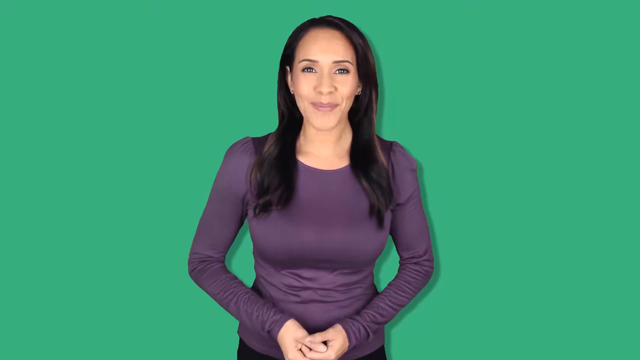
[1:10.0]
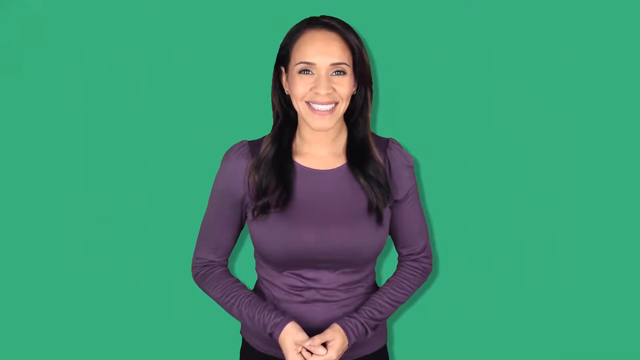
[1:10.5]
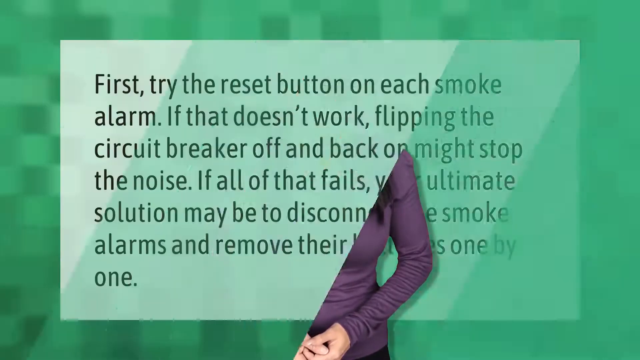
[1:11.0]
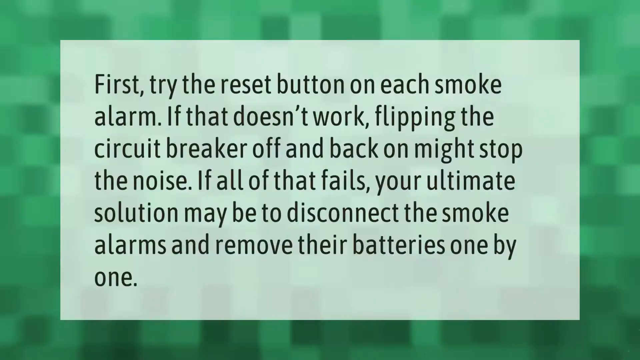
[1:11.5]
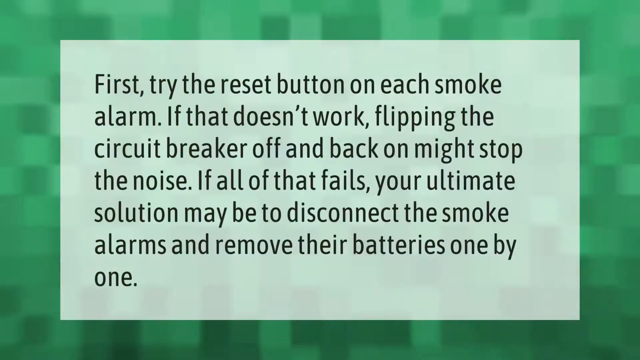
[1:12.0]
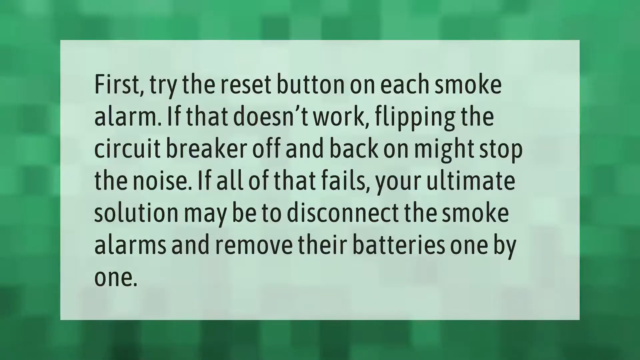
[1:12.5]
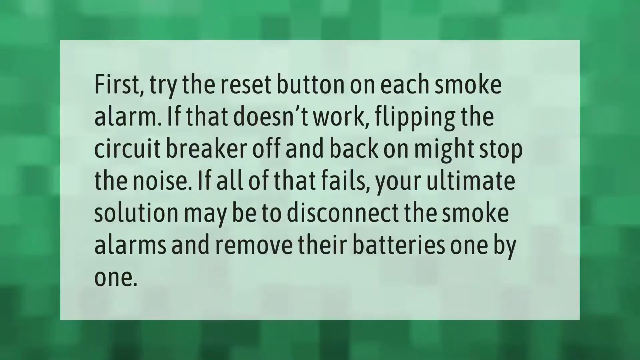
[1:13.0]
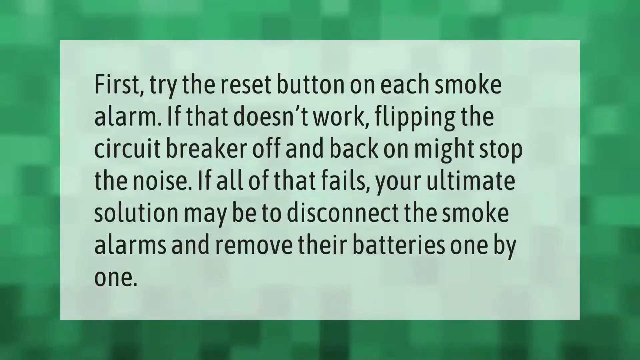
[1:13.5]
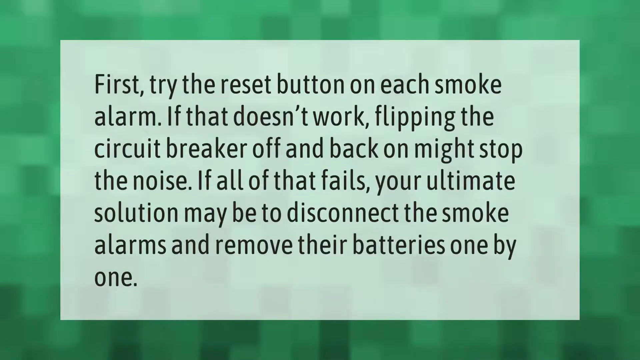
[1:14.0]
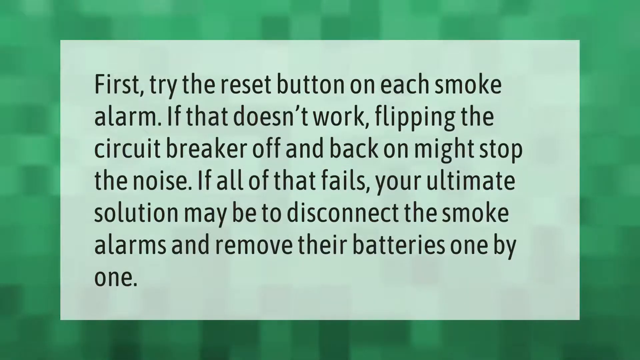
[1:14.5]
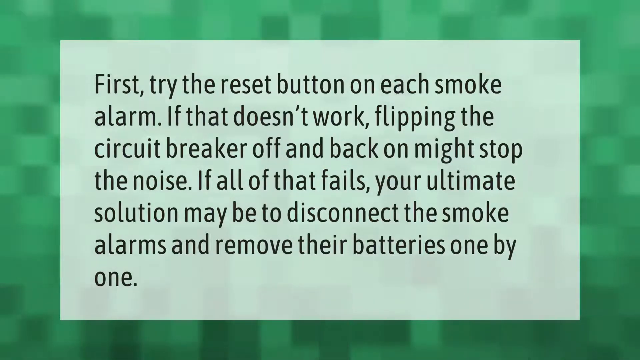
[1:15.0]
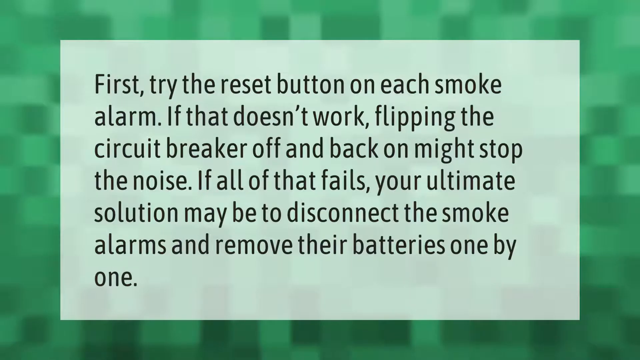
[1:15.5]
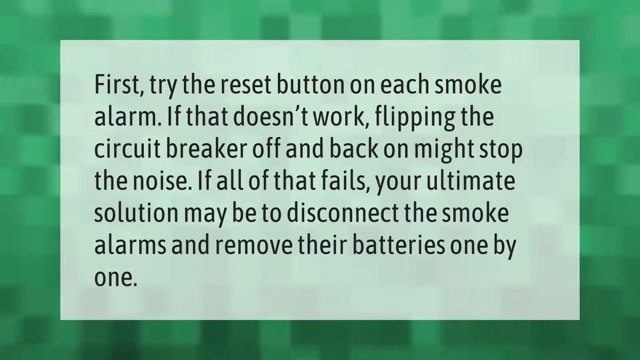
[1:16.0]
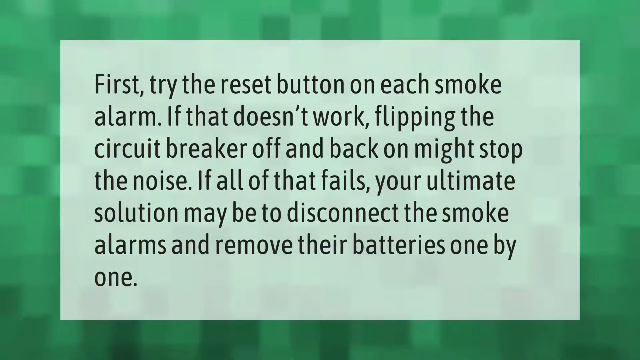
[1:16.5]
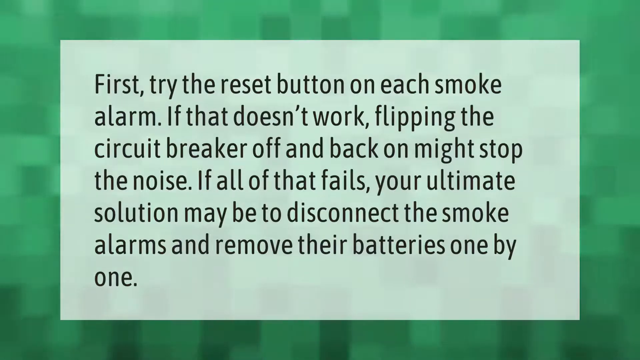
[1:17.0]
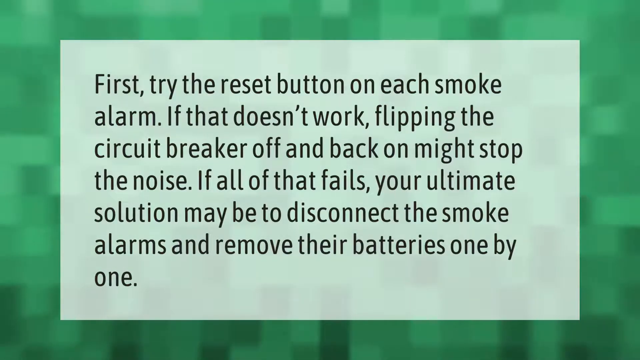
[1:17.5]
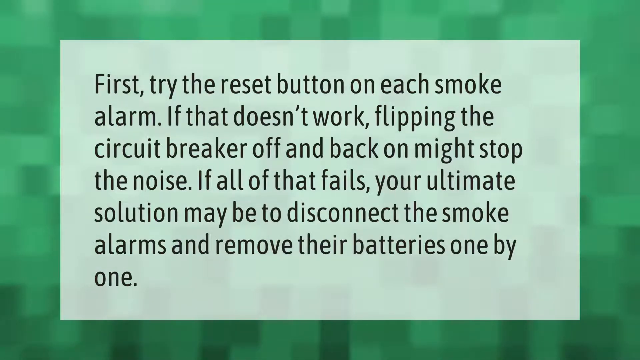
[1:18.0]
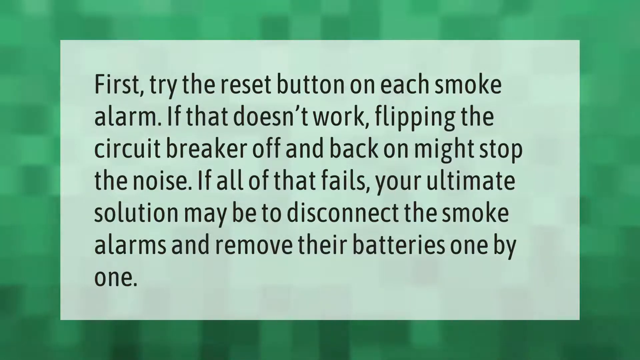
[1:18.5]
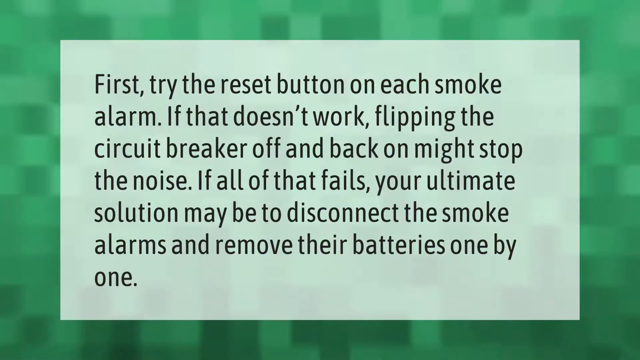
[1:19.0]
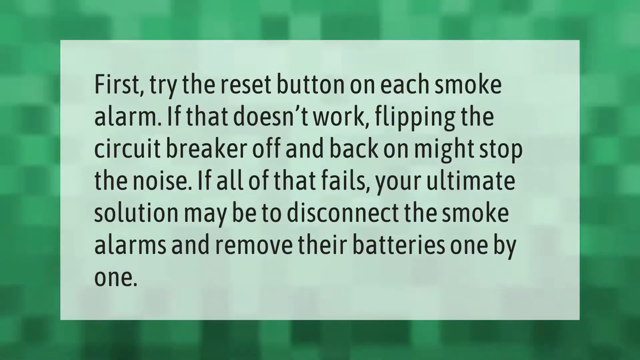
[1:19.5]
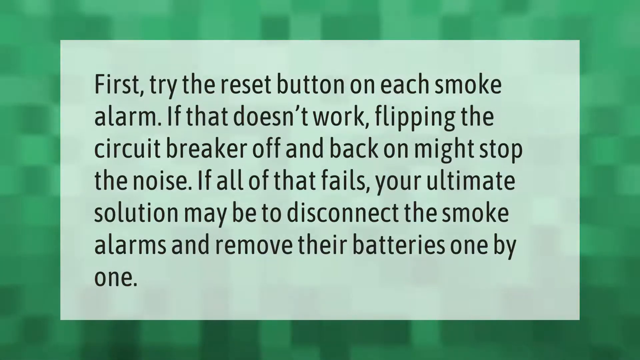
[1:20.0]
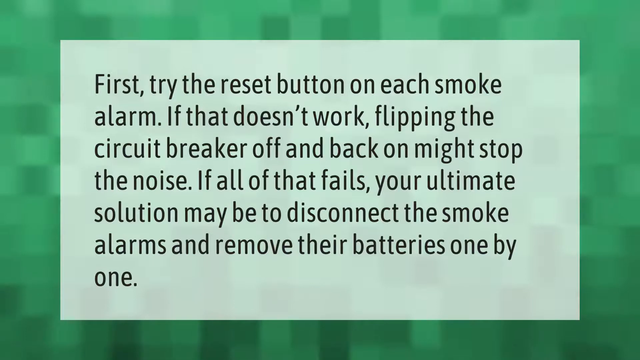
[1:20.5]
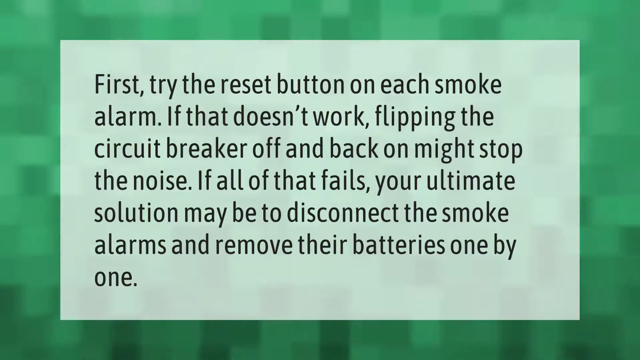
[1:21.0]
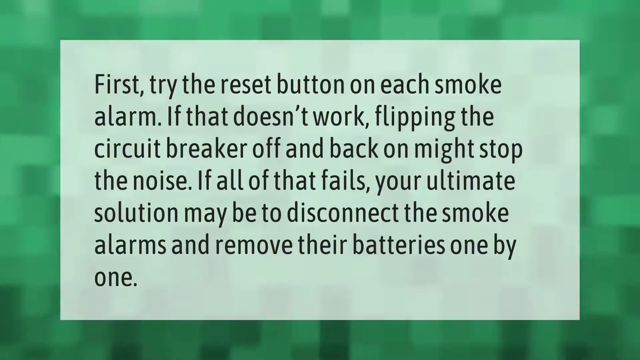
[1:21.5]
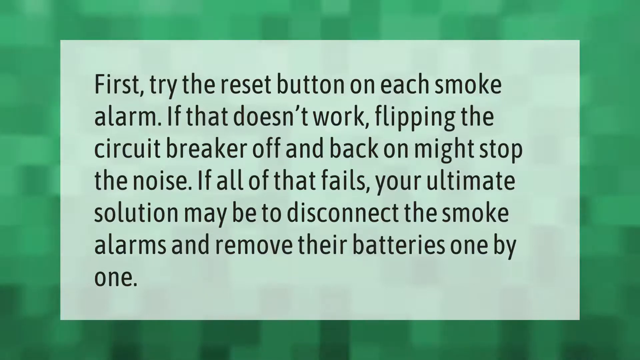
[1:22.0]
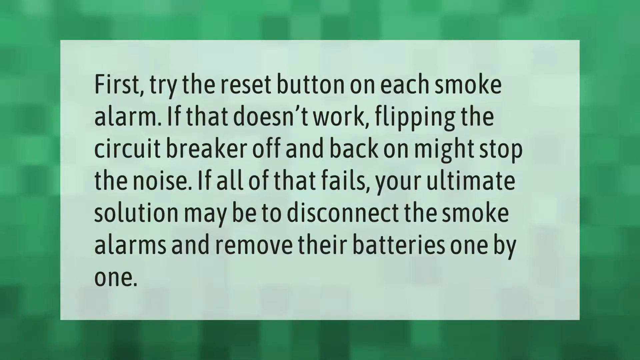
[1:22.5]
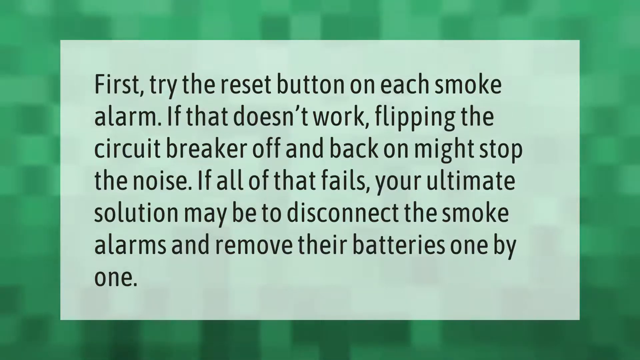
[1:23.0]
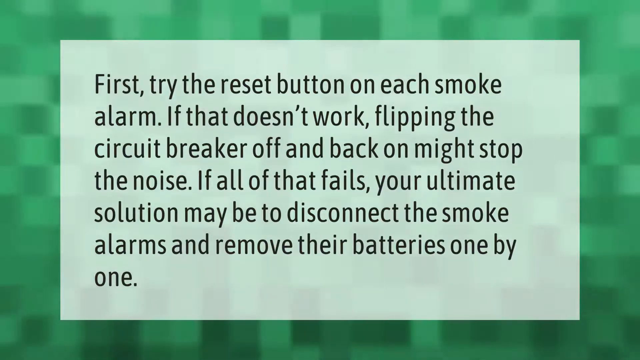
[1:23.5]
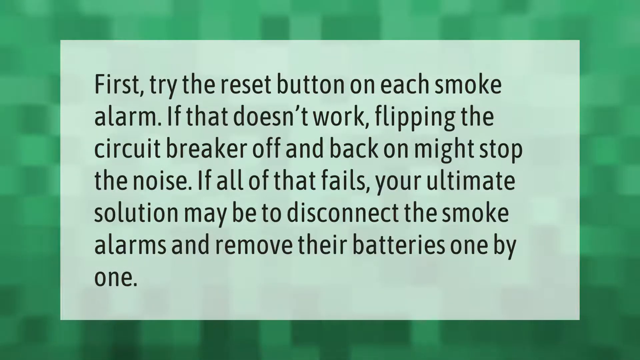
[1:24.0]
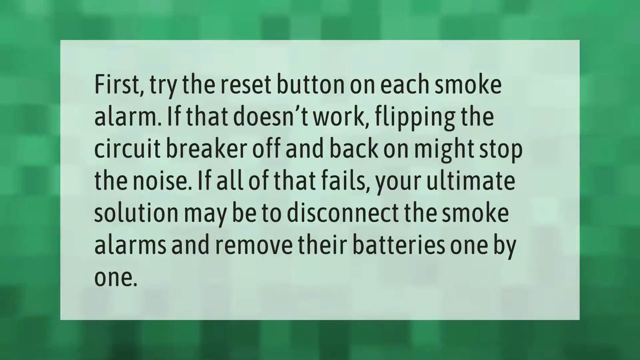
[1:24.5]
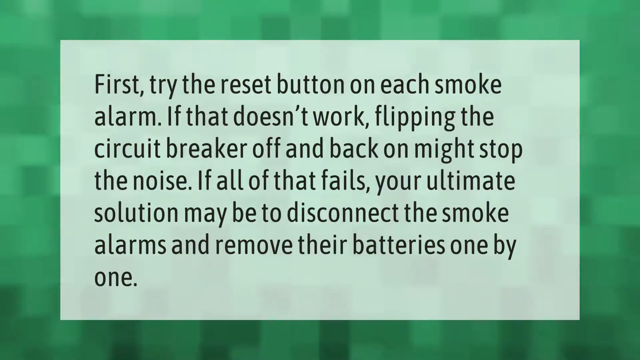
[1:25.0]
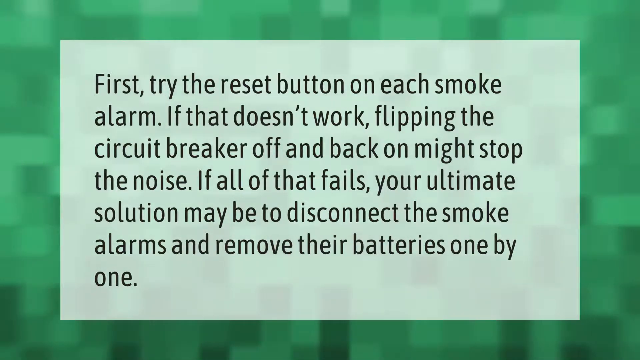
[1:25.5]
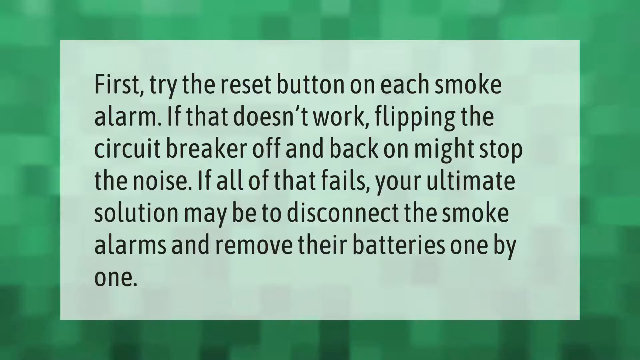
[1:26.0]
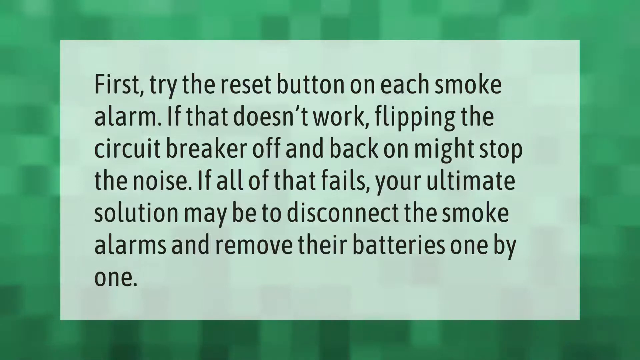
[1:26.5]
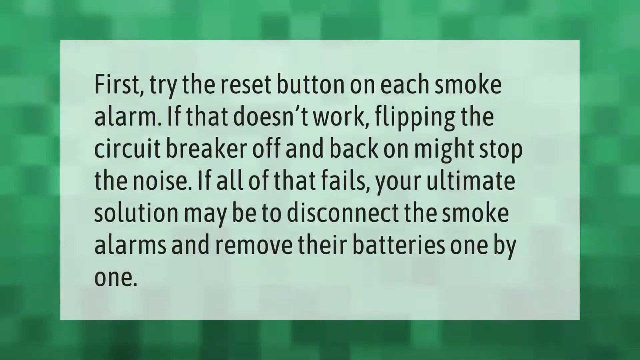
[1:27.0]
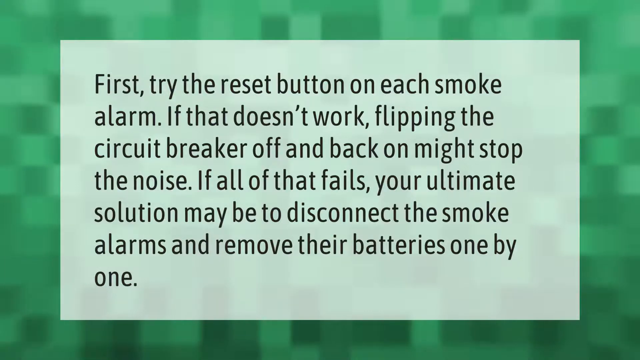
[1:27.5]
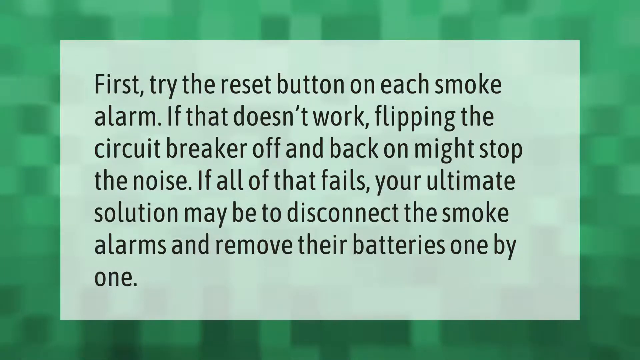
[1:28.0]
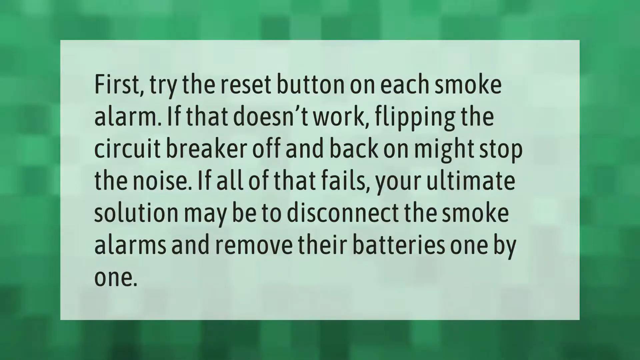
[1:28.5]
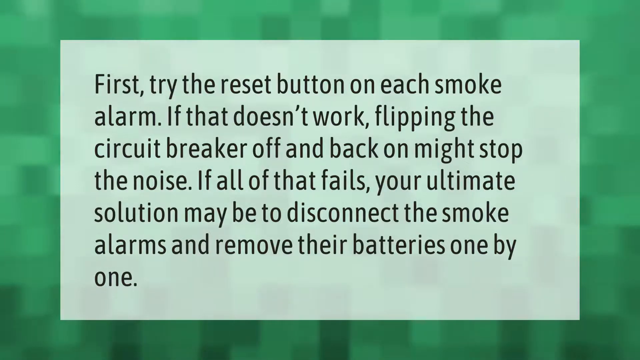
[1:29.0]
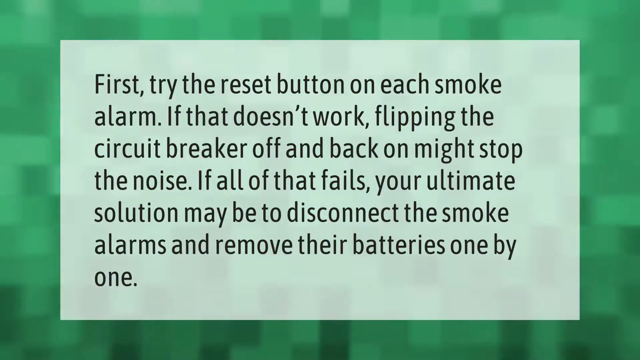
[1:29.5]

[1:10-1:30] A dark green screen set on a lighter screen says "First try the reset button on each smoke alarm. If that doesn't work, flipping the circuit breaker off and back on might stop the noise. If all of that fails, your ultimate solution may be to disconnect the smoke alarms and remove their batteries one by one." The video stays on this screen.